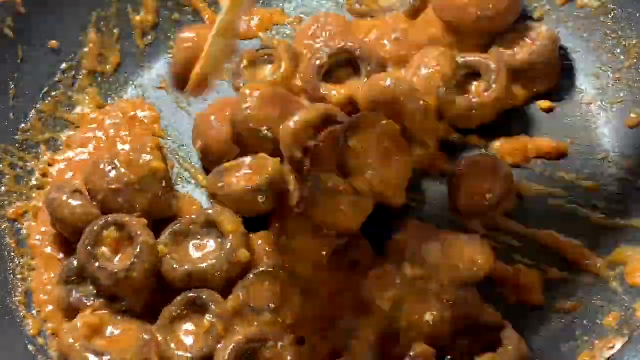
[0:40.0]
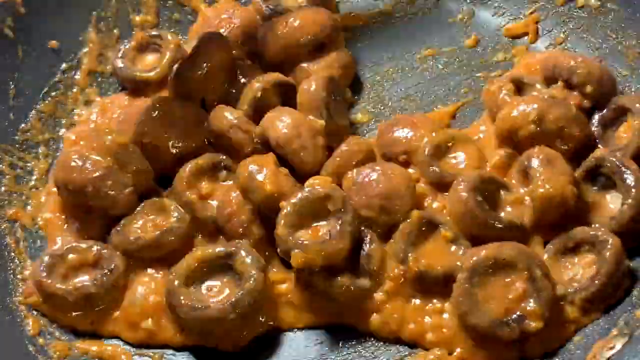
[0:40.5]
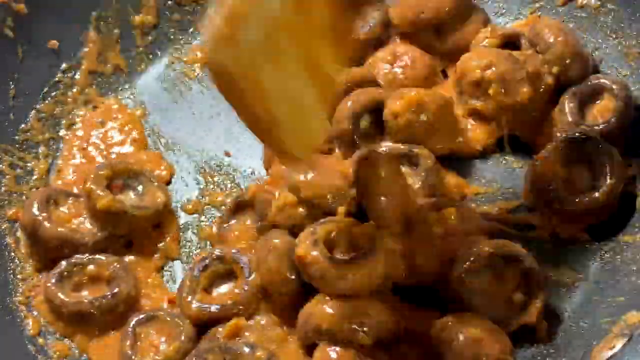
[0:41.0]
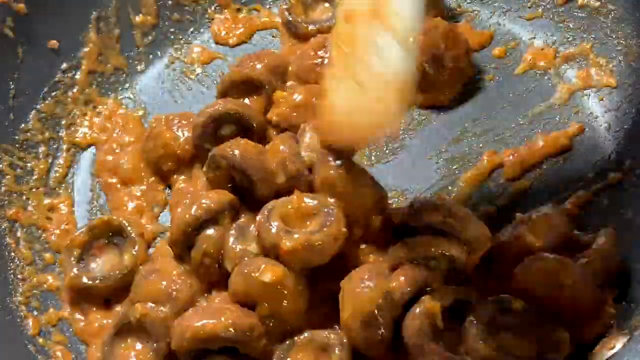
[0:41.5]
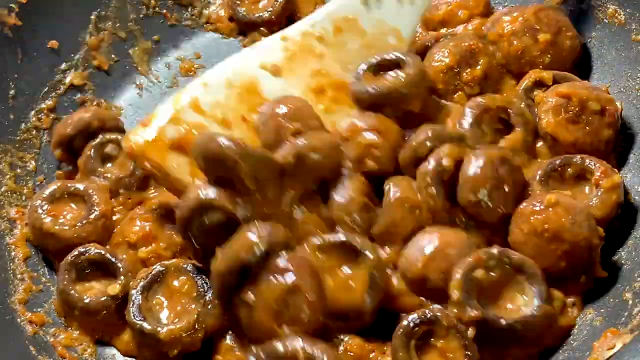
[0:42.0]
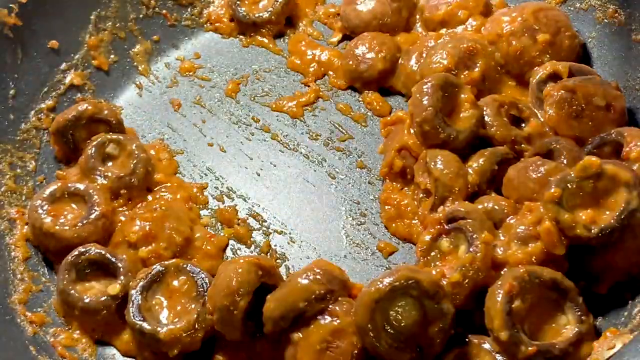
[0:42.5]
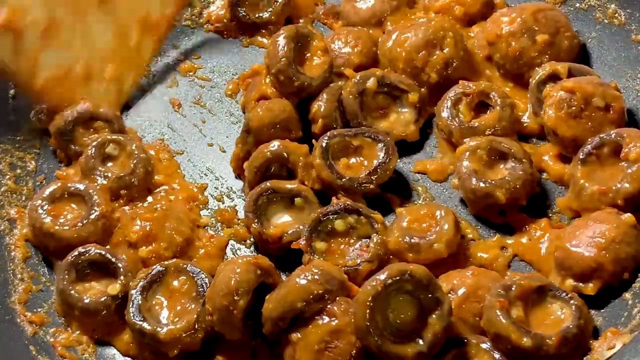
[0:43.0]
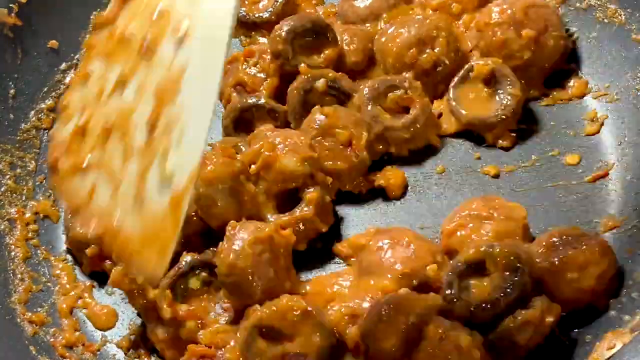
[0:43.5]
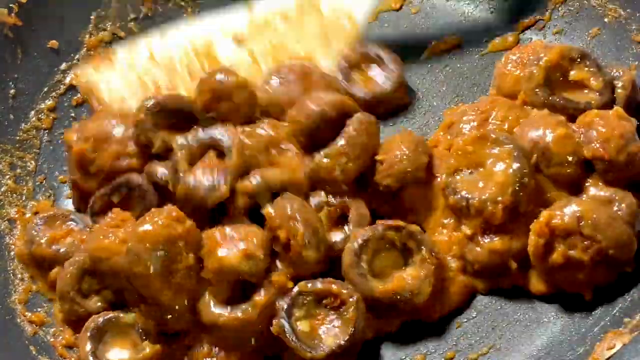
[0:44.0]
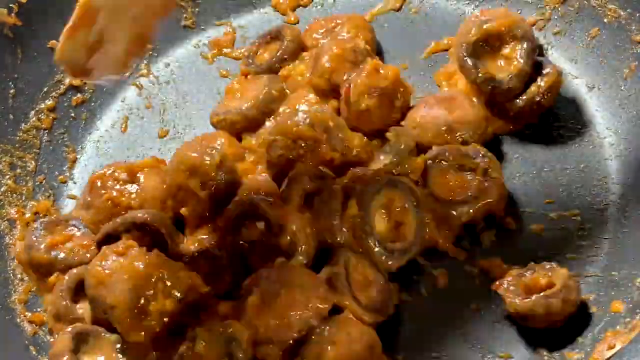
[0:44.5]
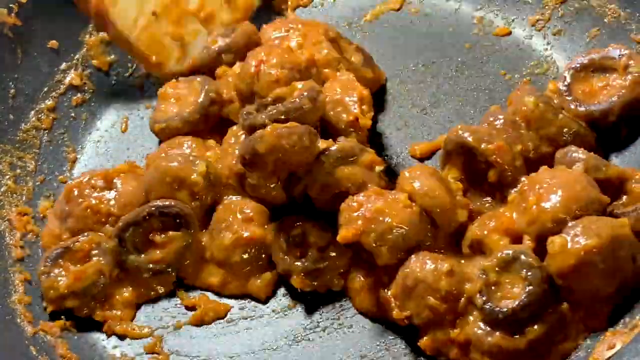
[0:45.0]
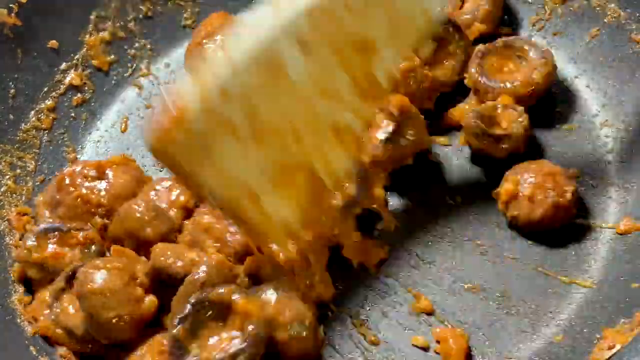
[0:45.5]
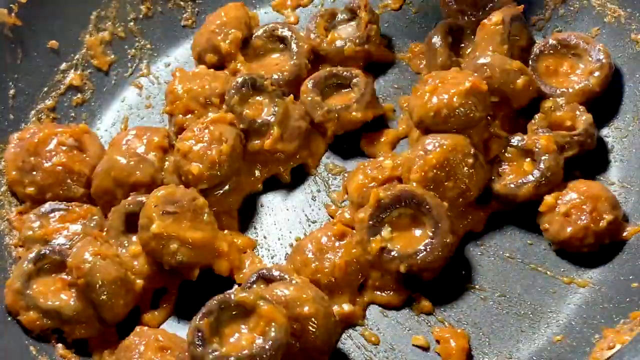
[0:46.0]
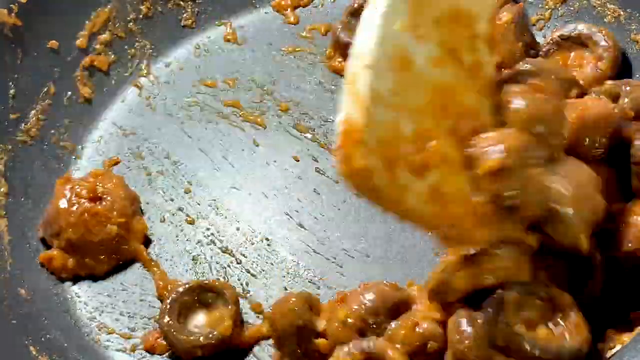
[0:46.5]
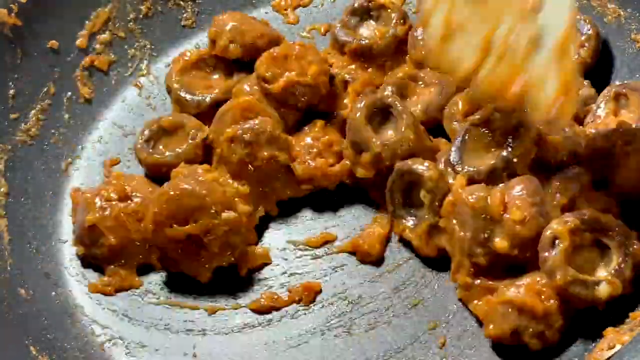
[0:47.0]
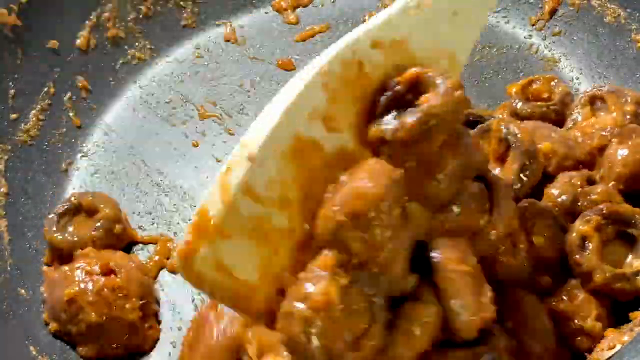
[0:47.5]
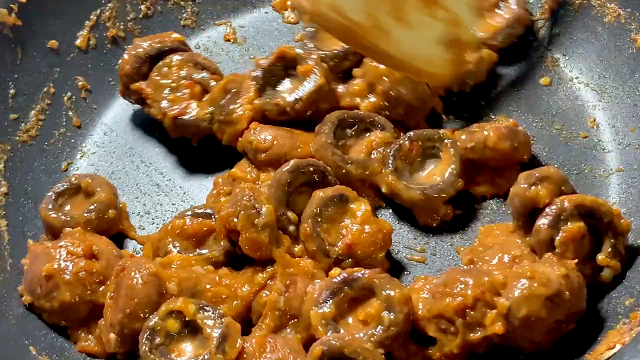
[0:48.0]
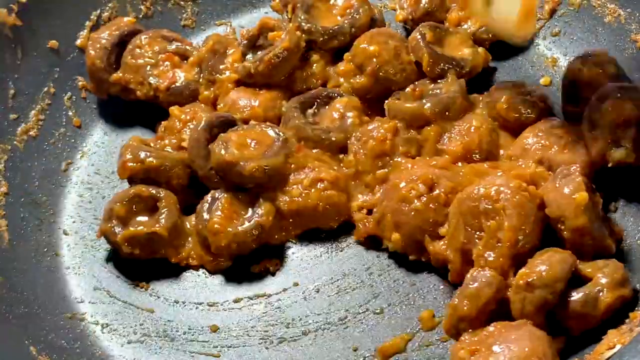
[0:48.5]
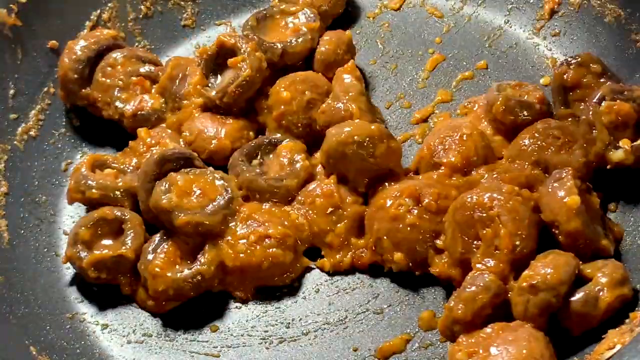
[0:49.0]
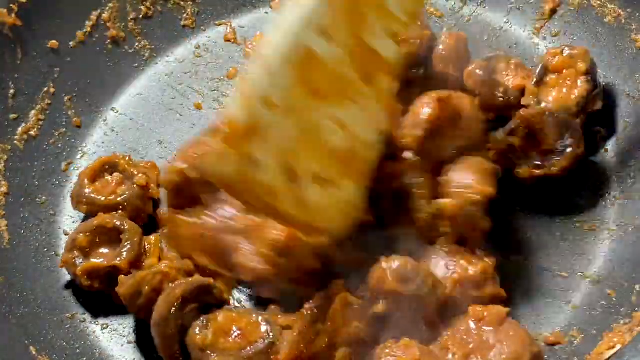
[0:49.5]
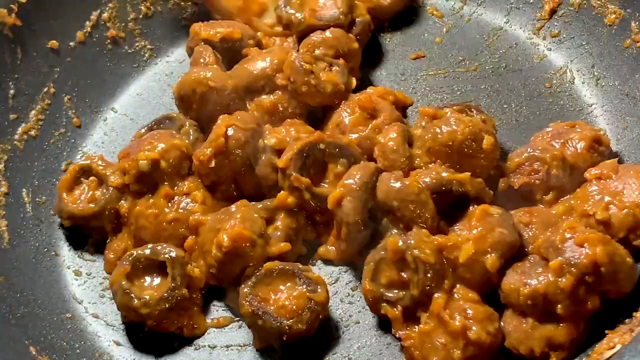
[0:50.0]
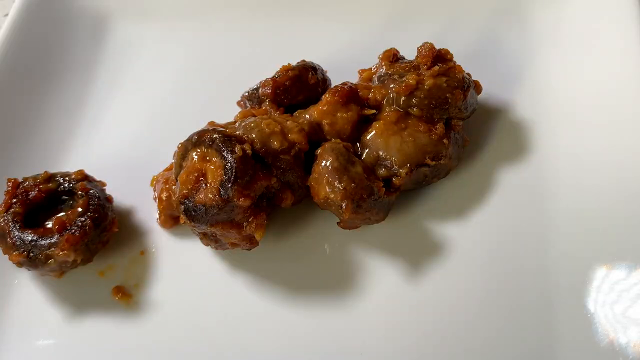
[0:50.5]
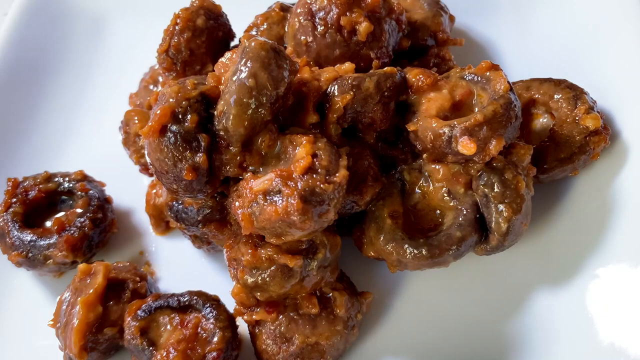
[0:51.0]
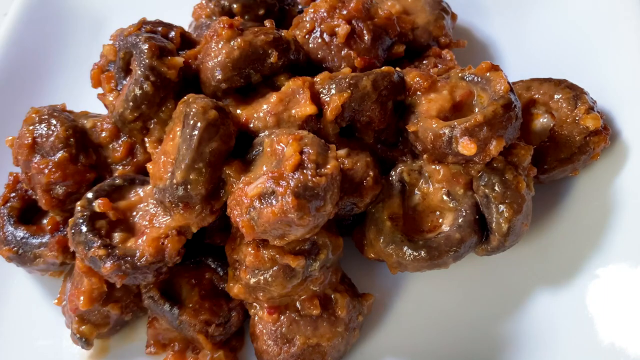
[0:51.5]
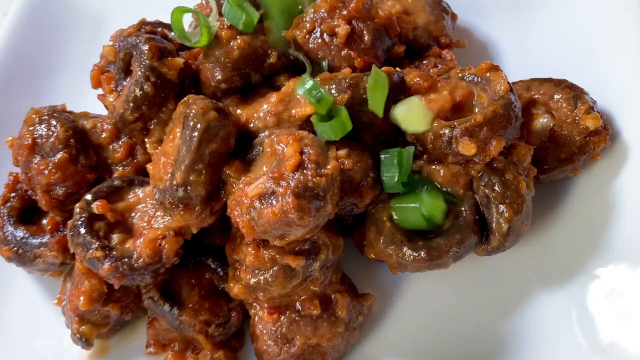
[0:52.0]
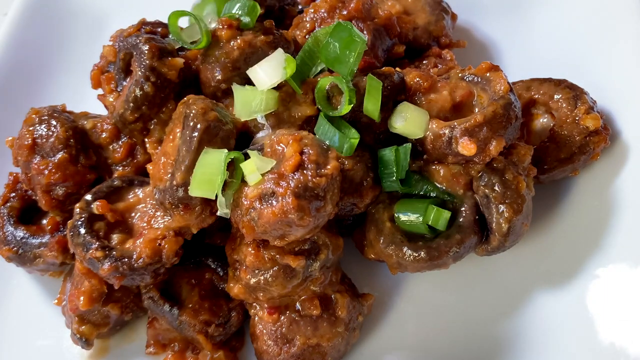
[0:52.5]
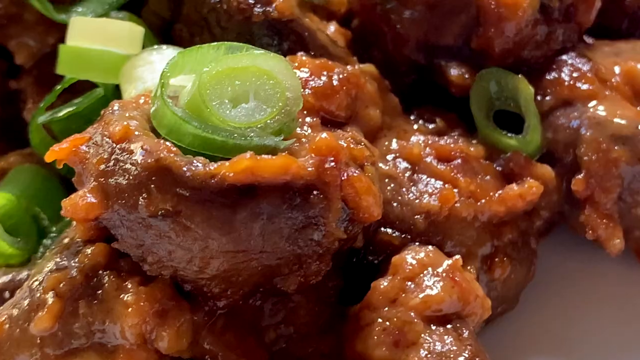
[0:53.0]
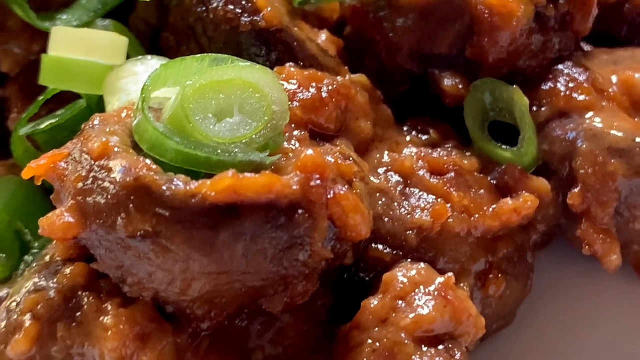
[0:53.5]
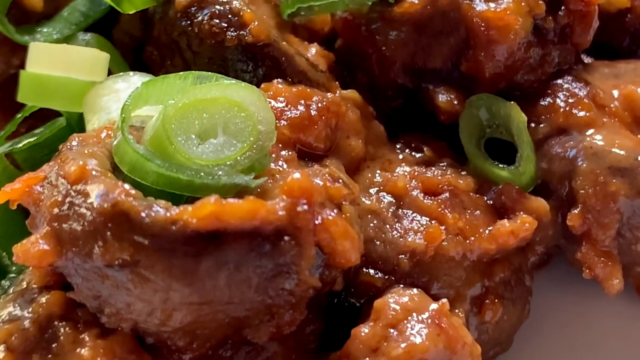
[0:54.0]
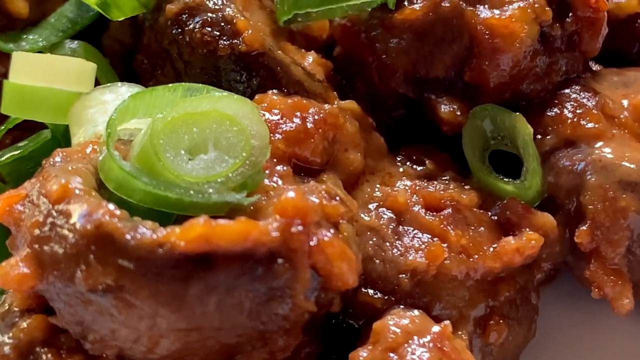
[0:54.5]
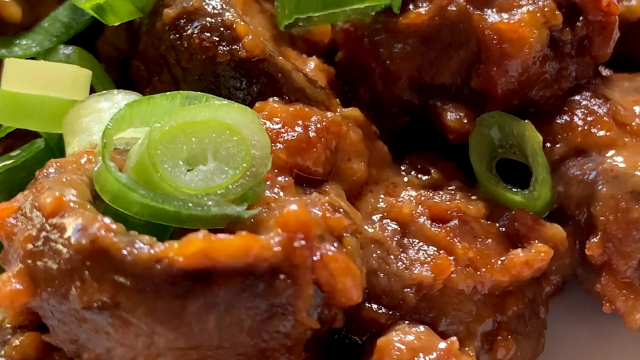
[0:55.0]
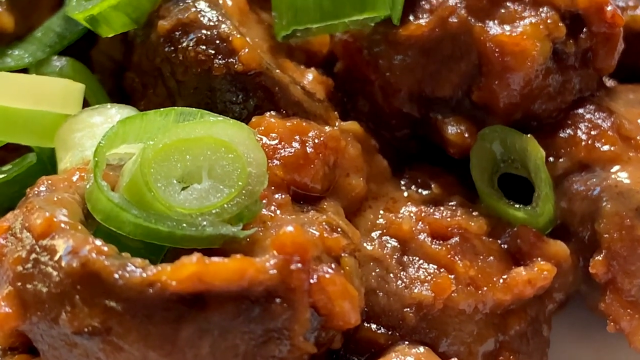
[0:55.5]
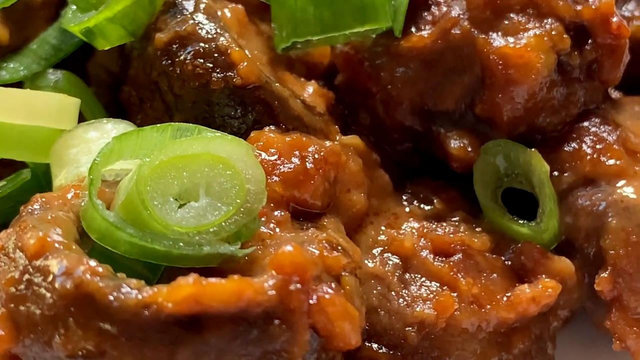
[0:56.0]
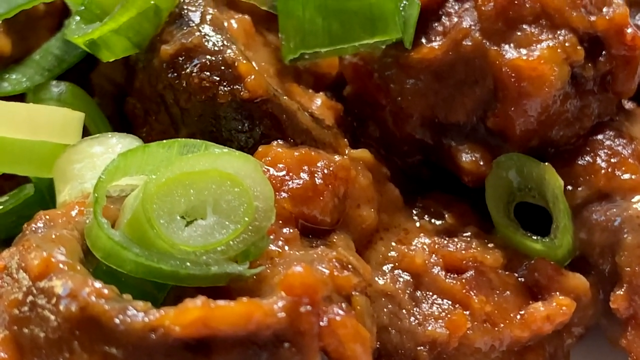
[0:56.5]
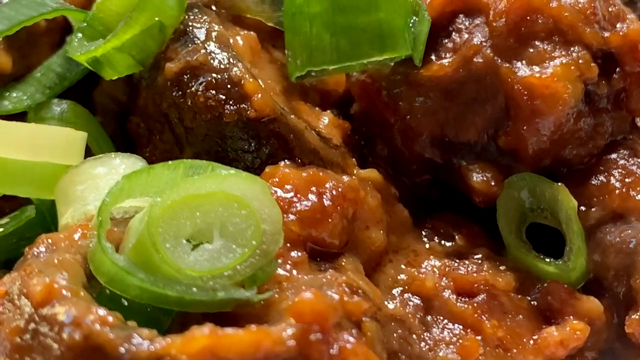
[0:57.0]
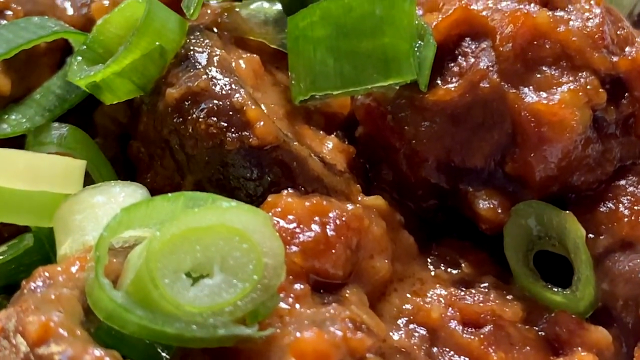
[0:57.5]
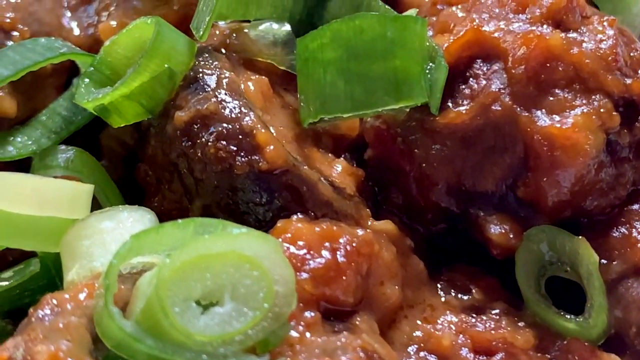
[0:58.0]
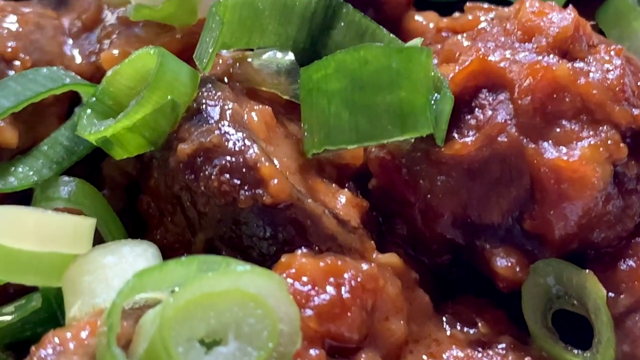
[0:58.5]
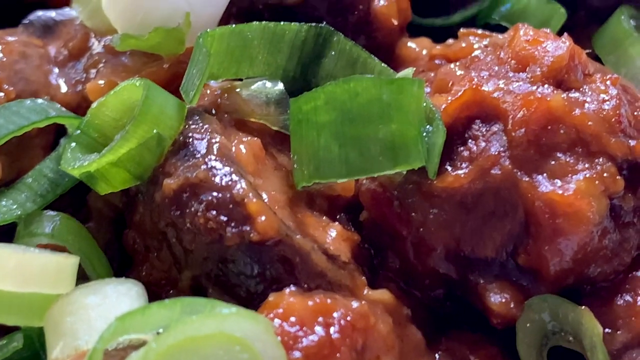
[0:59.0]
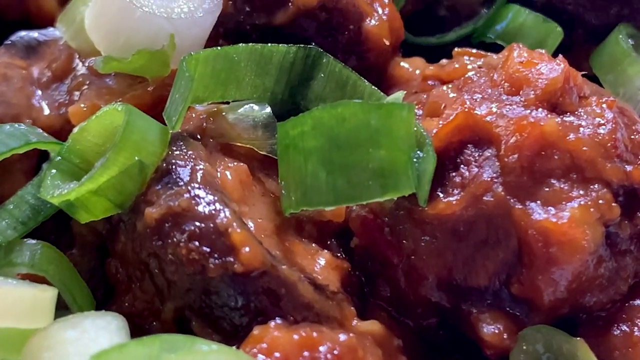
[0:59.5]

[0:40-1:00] Someone is preparing a dish that looks to be made primarily of mushrooms. A close-up of a frying pan shows mushrooms that look like they have been cooked for quite a while; they are quite shriveled and coated in an orangish sauce that looks like it has thickened. In sped-up footage, a spatula stirs the mushrooms around, and the camera keeps cutting to show the sauce reducing more and more. The scene then cuts to a white plate, and the mushrooms are served onto it one helping at a time from the spatula, with choppy cuts between each bunch being placed. The editing then returns to normal time, and chopped scallions are sprinkled across the top of the mushrooms. After another cut, a close-up shows the mushrooms, scallions and sauce as the camera slowly moves over the surface from the bottom, moving up and slightly to the right for a close look at the dish.